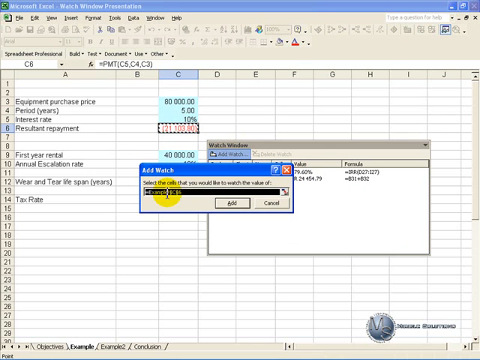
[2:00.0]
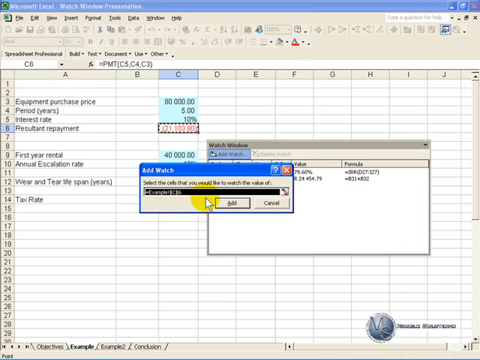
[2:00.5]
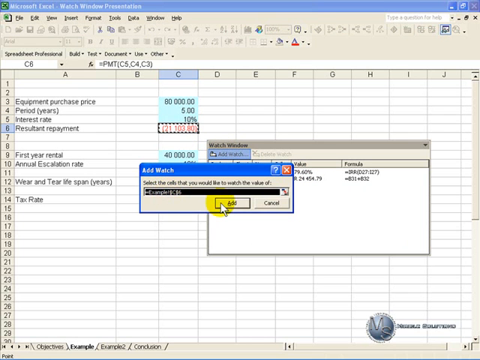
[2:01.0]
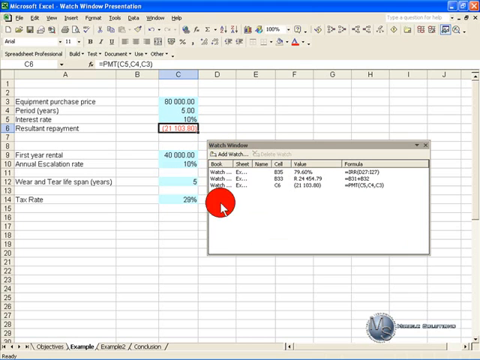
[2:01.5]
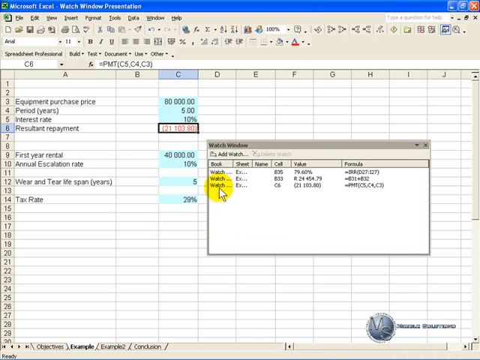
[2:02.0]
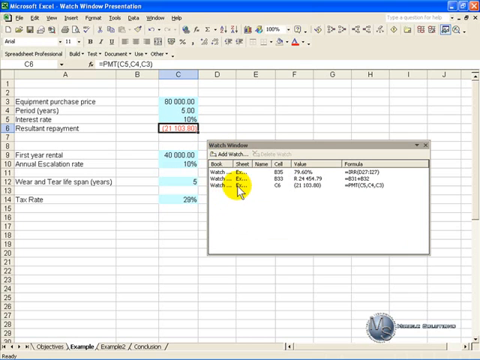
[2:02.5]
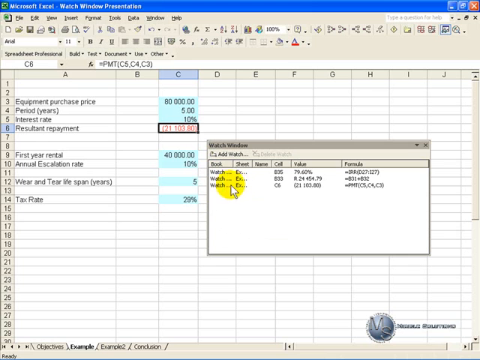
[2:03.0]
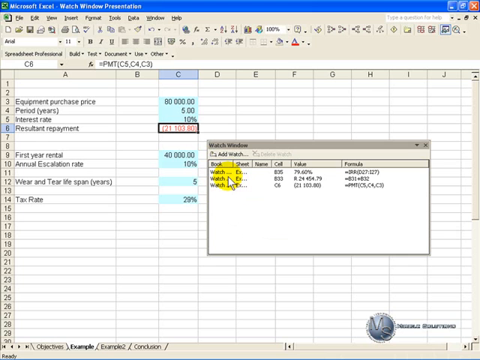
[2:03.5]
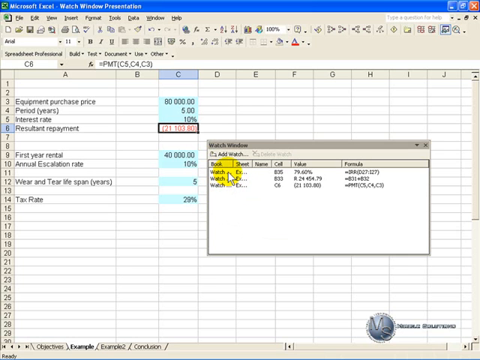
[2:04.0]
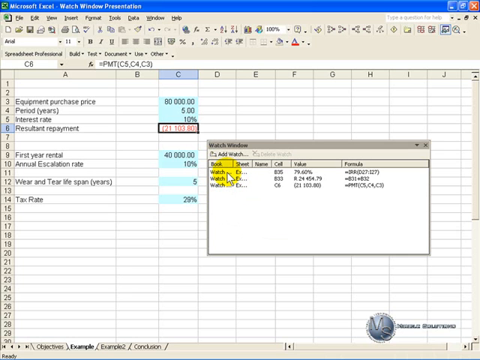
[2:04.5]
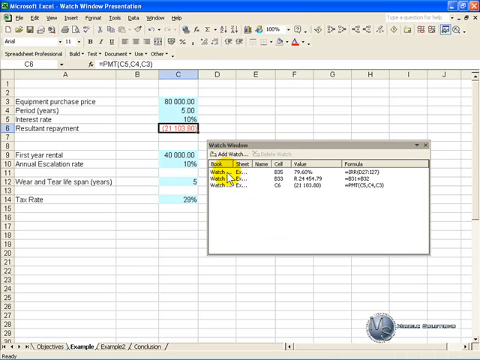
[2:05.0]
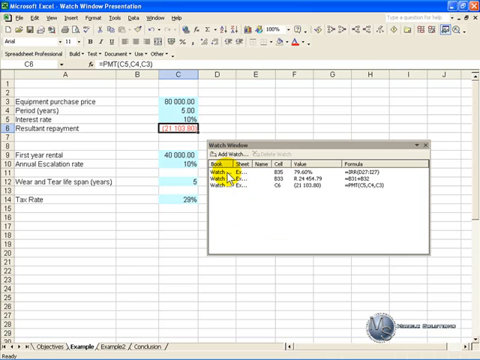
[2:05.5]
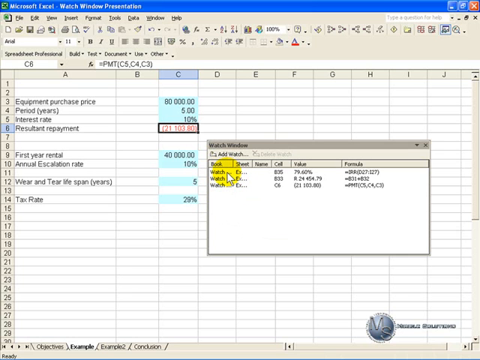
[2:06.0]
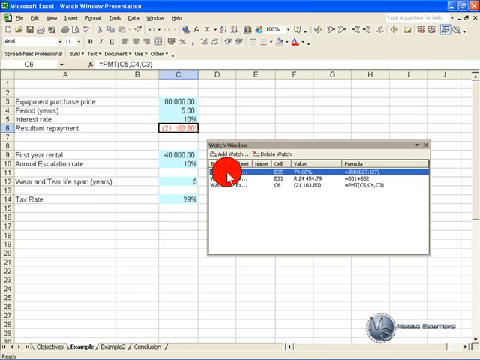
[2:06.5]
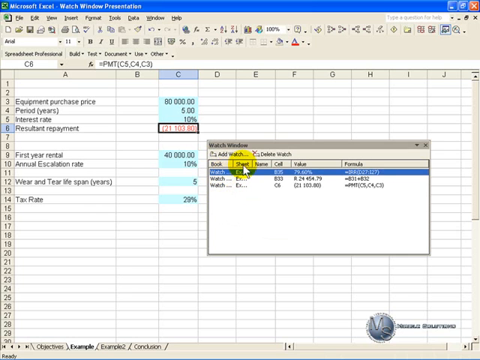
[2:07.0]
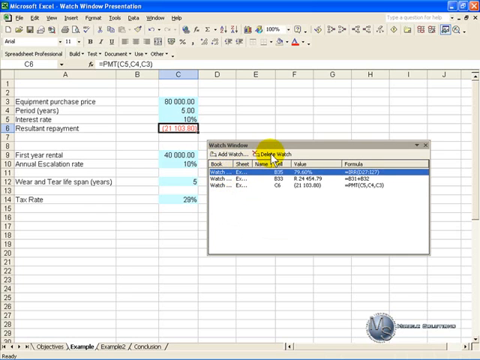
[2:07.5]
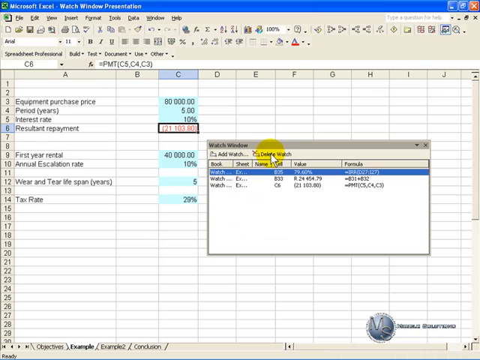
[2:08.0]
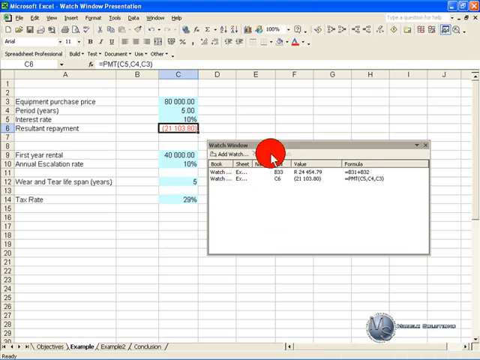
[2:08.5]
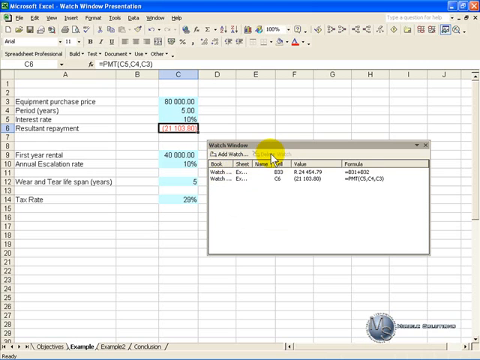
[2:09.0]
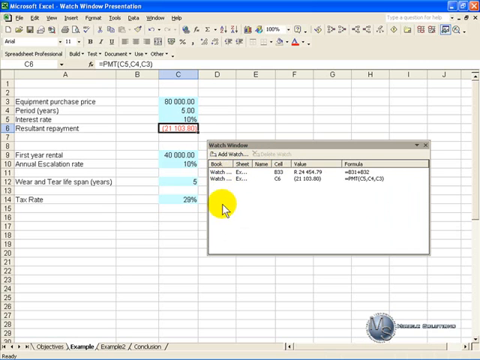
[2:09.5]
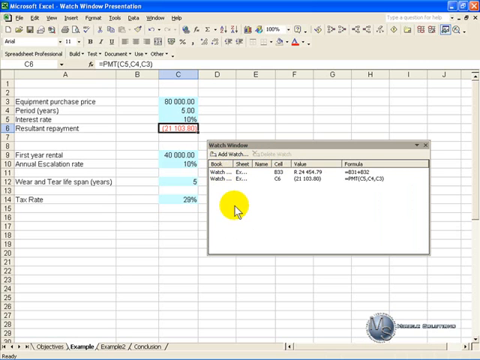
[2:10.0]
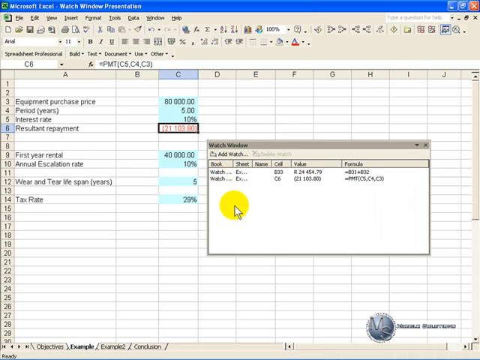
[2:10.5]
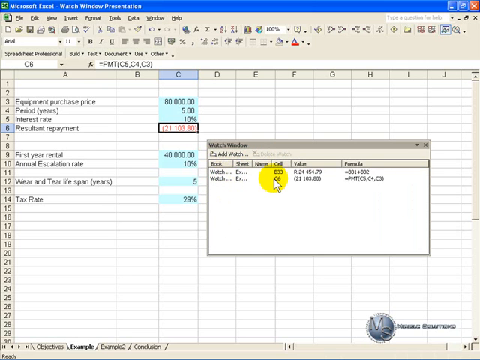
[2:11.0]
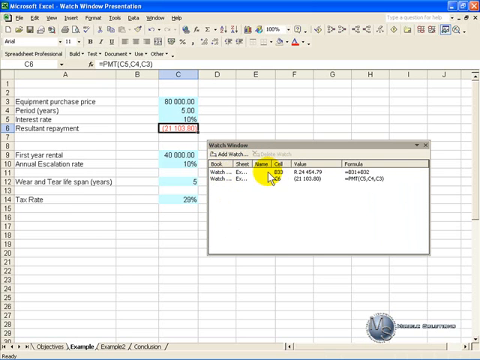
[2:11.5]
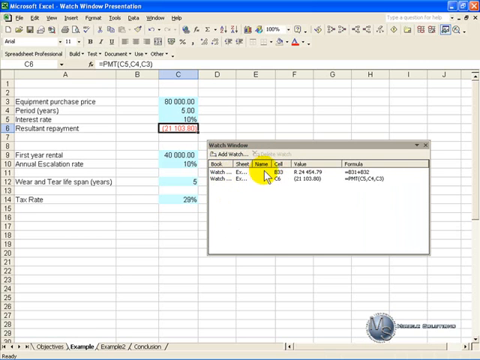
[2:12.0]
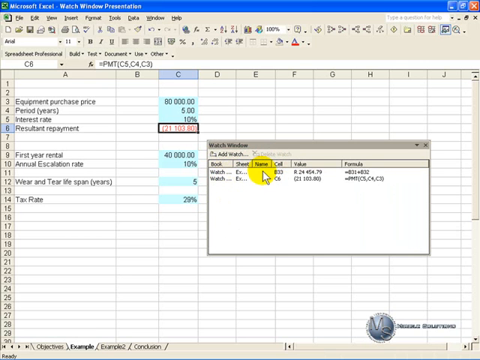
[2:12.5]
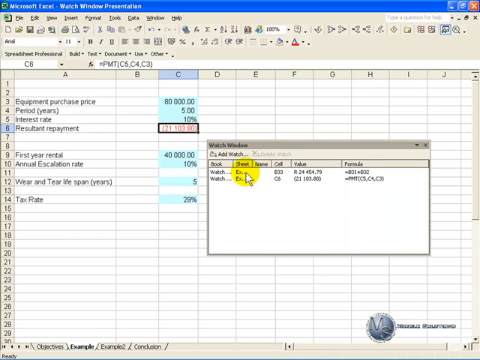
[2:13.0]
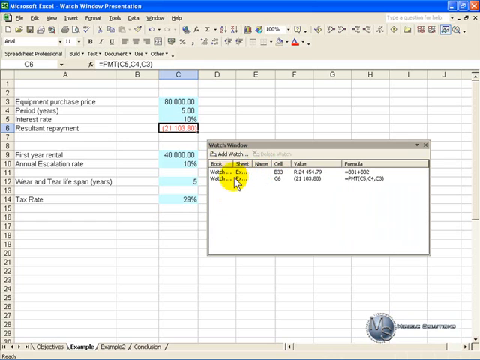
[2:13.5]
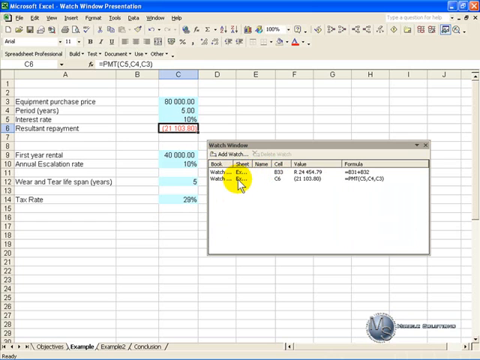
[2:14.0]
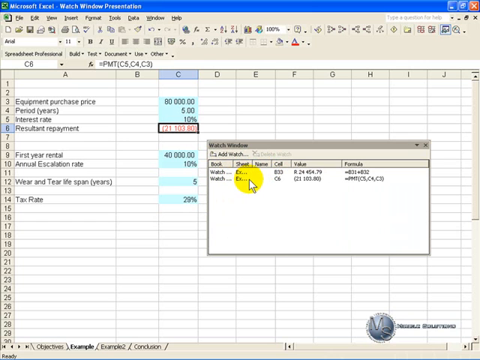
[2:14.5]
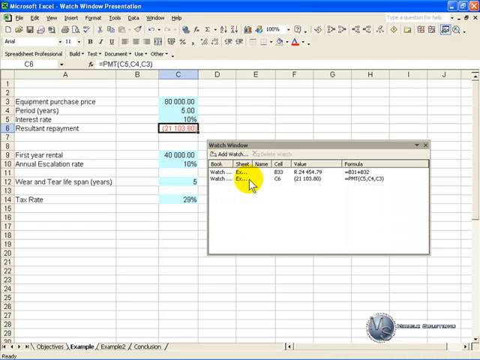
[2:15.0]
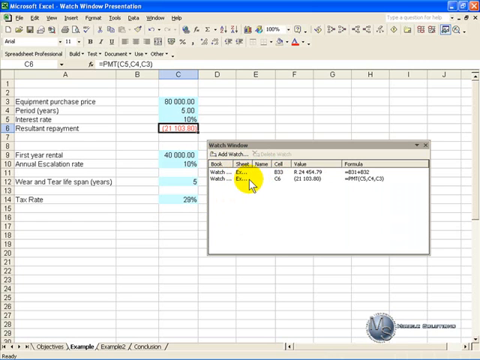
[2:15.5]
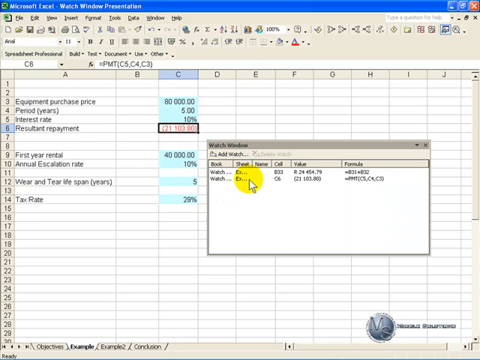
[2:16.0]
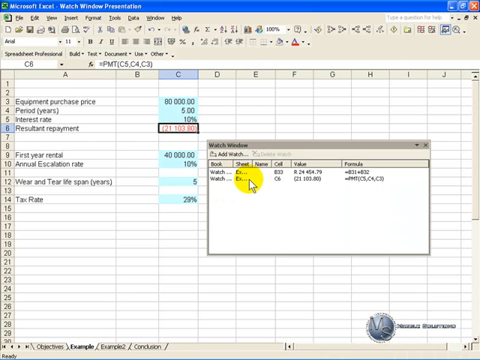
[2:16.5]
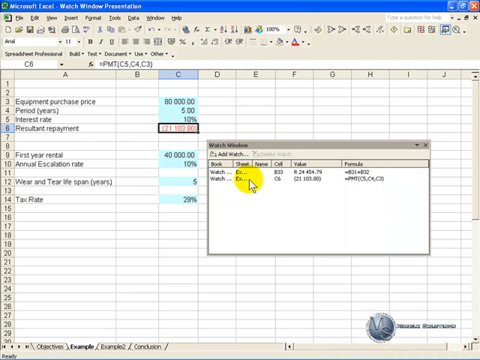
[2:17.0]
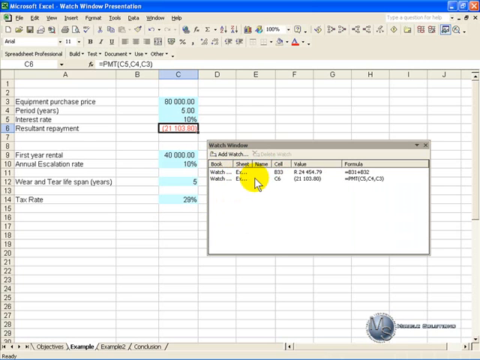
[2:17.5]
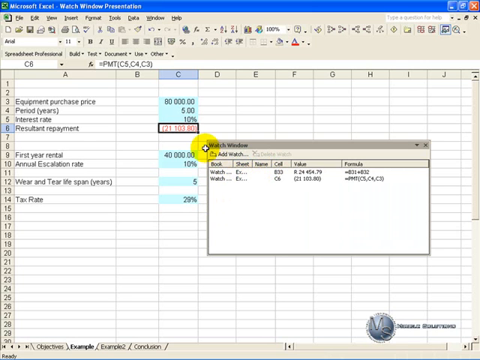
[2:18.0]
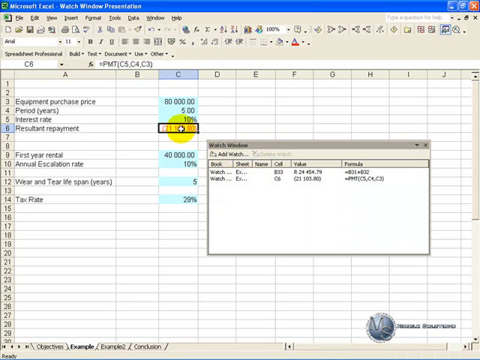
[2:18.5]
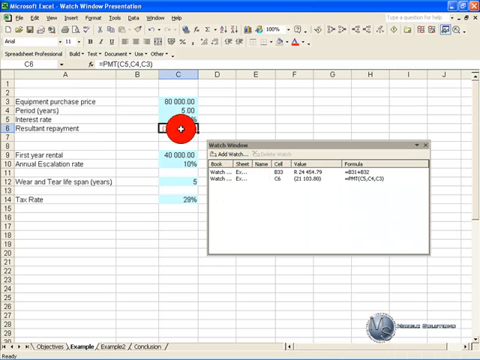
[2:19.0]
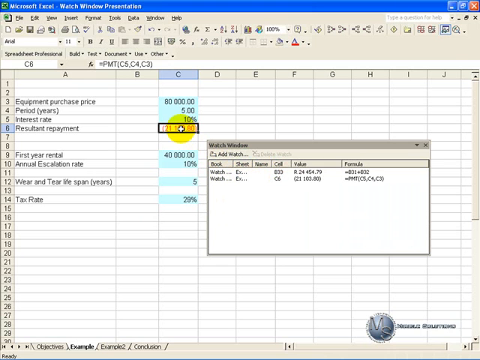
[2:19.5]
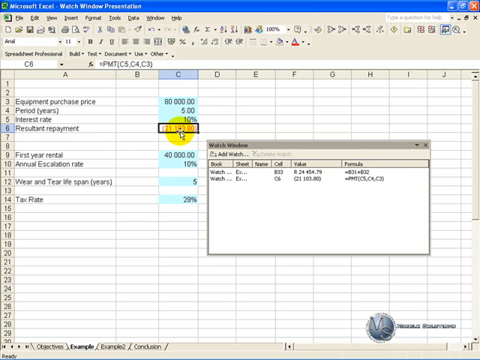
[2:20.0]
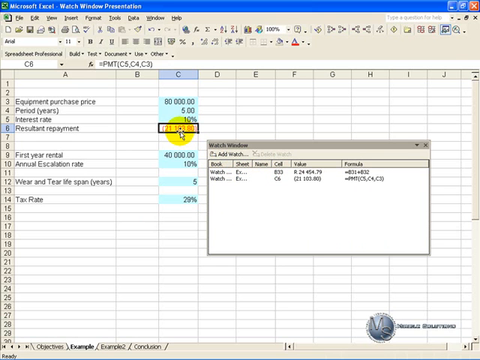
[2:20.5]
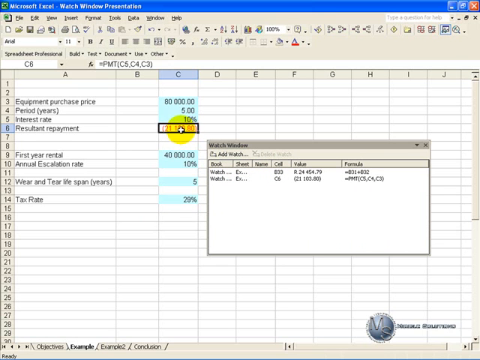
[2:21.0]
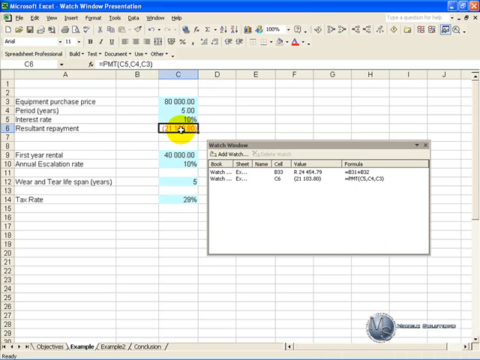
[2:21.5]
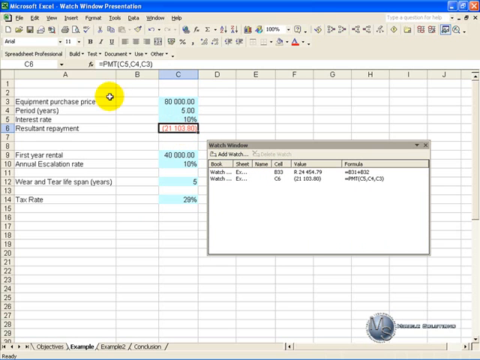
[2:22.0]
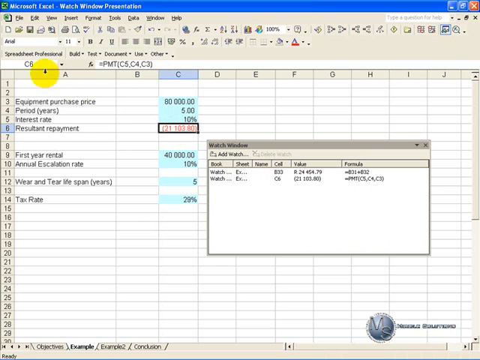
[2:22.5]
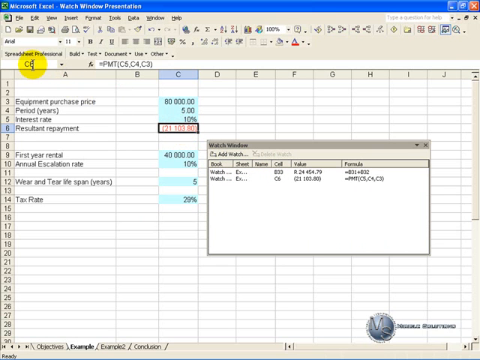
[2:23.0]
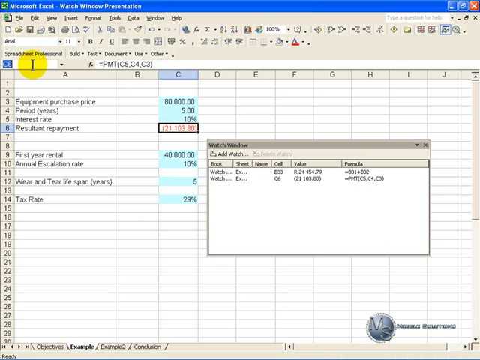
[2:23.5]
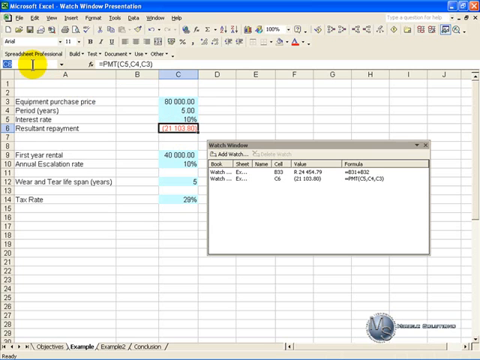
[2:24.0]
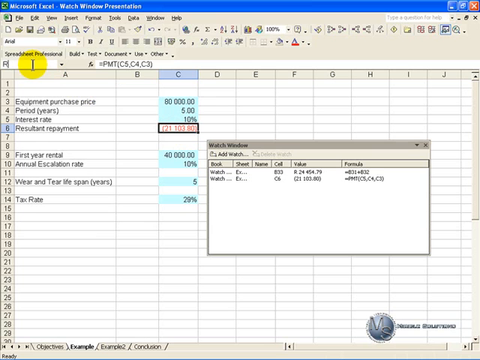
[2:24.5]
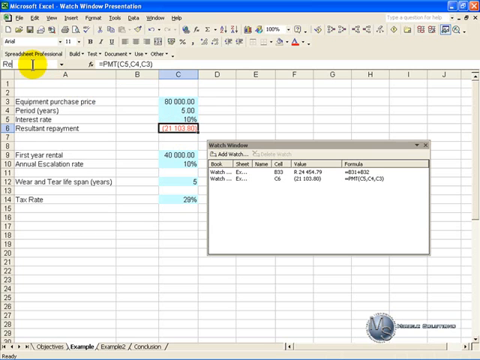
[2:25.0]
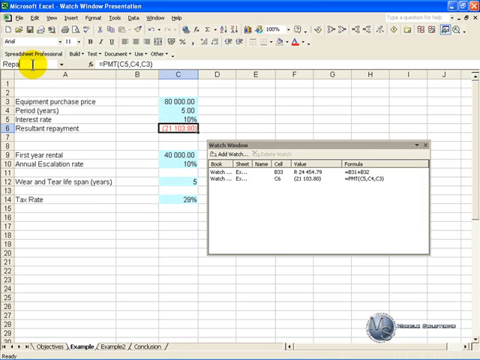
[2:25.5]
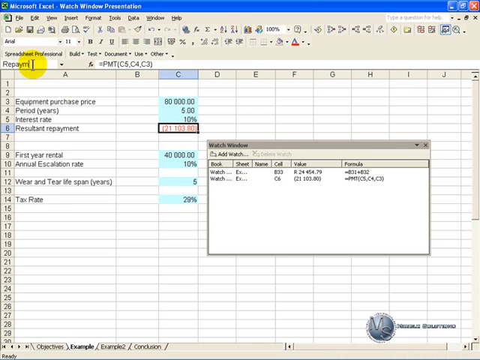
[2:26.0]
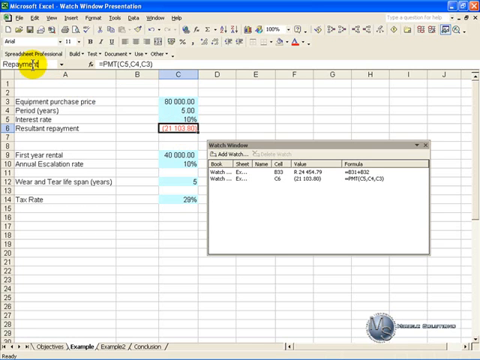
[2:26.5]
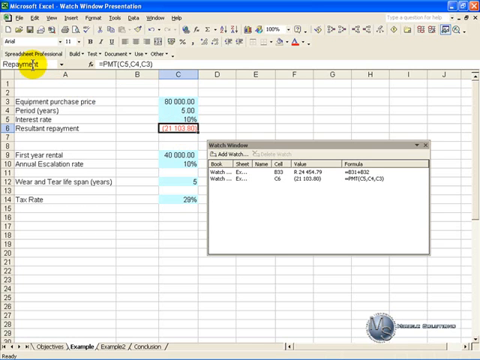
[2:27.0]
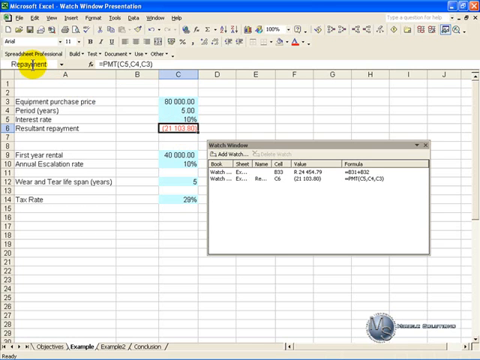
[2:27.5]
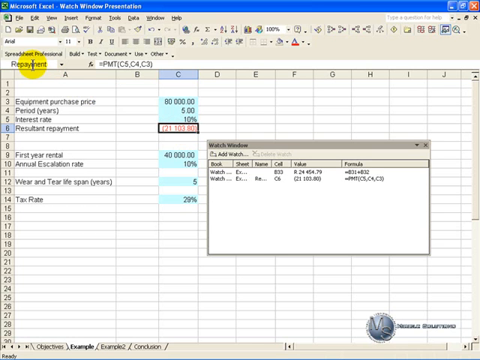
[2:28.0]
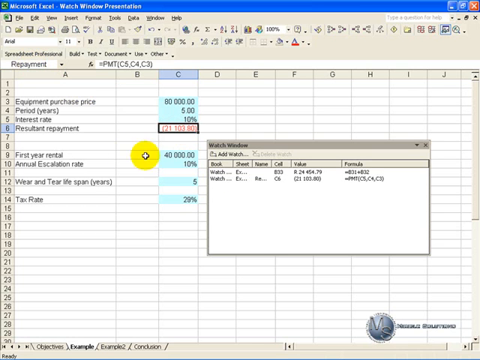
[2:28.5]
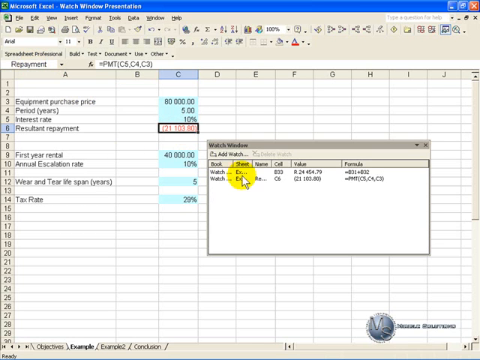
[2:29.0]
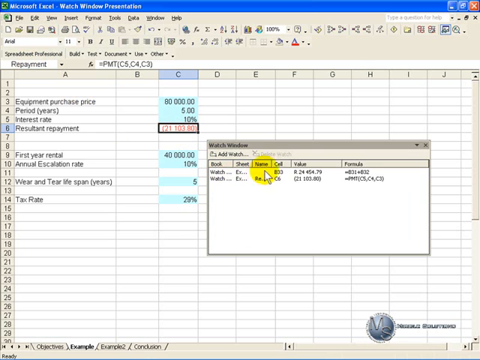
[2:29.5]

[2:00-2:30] The mouse clicks add in the add watch window, and cell C6 is added to the watch window, so three cells are being watched. The mouse clicks the top watched cell and then clicks delete, leaving only two cells. The mouse clicks or hovers over these cells, then hovers over and clicks C6, goes to the top left of the screen, hovers over an input box and types "repayment," presses enter, and returns to the watch window. The deleted cell appears to have been B35, while B33 and C6 remain in the watch window. The yellow-circled mouse moves around the screen and clicks some of the cells.